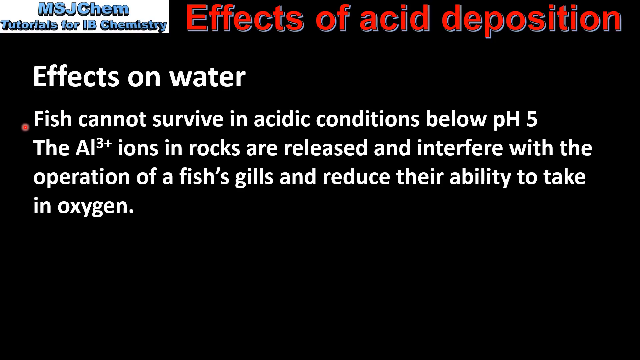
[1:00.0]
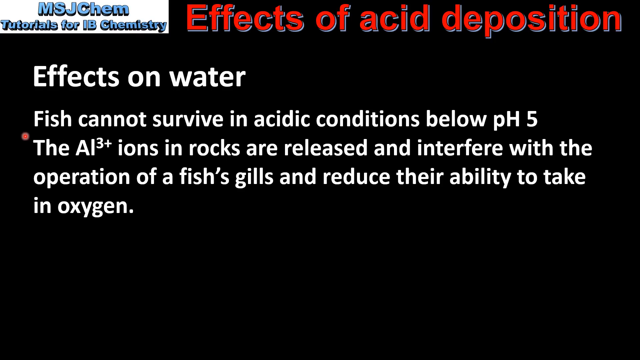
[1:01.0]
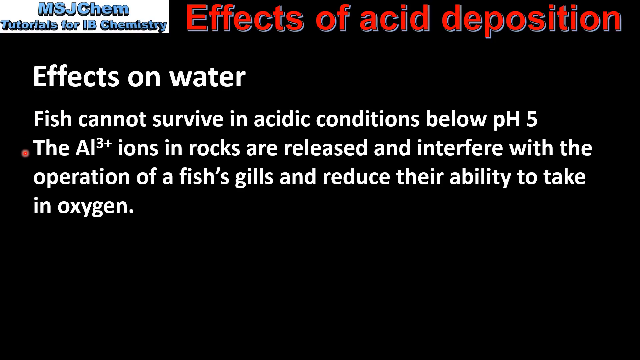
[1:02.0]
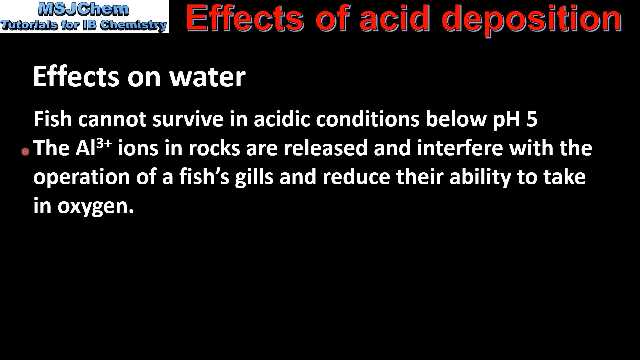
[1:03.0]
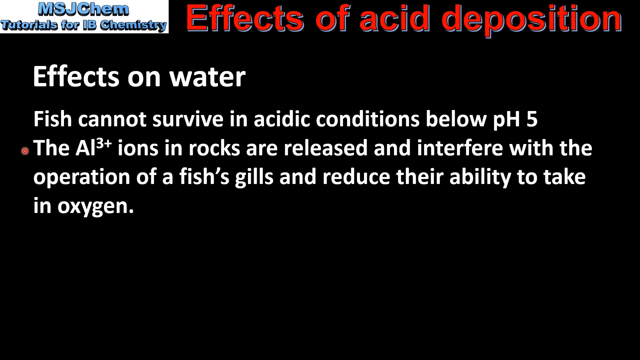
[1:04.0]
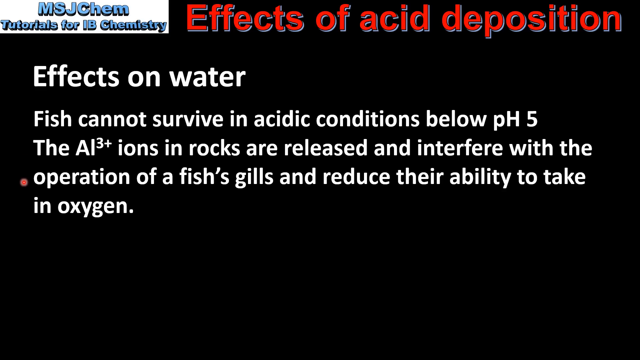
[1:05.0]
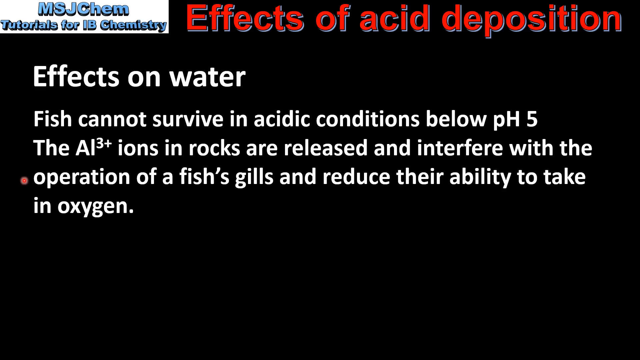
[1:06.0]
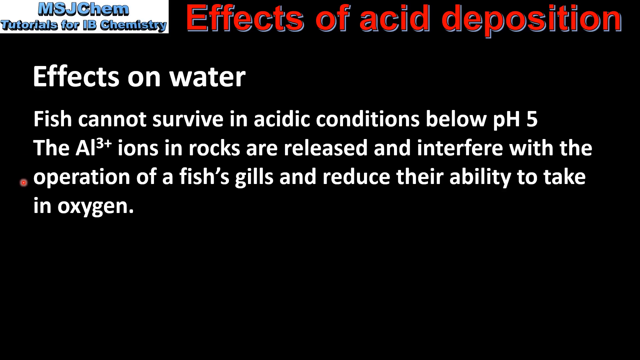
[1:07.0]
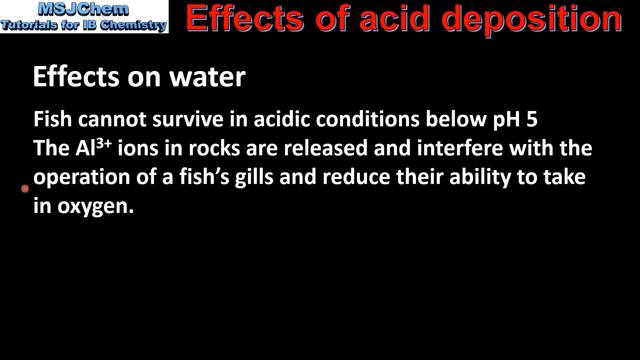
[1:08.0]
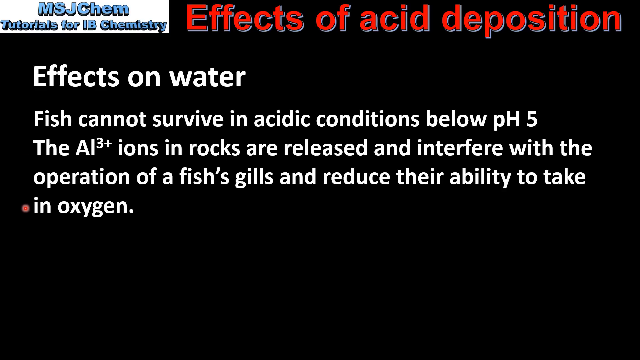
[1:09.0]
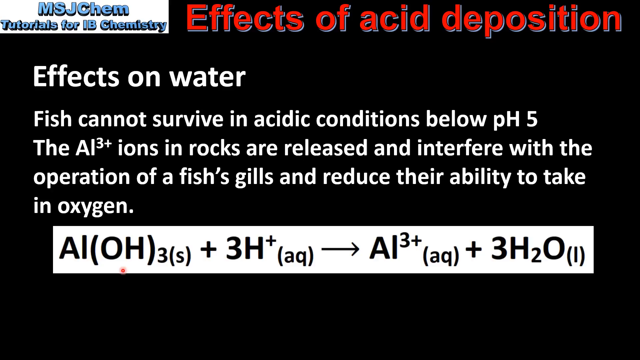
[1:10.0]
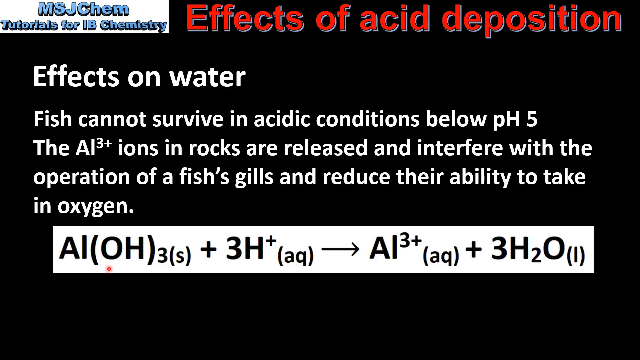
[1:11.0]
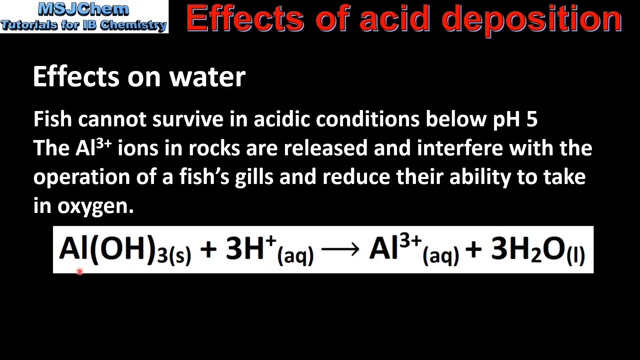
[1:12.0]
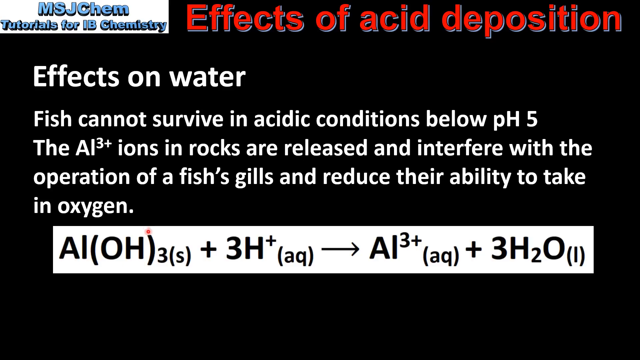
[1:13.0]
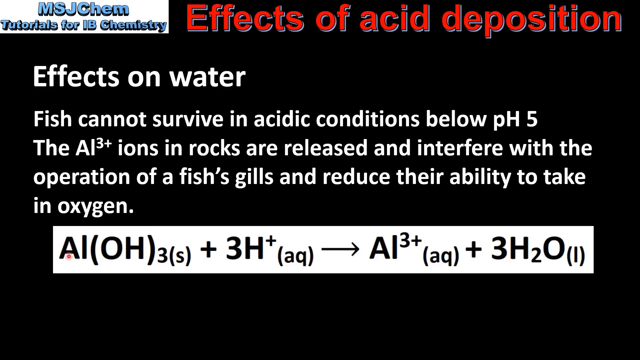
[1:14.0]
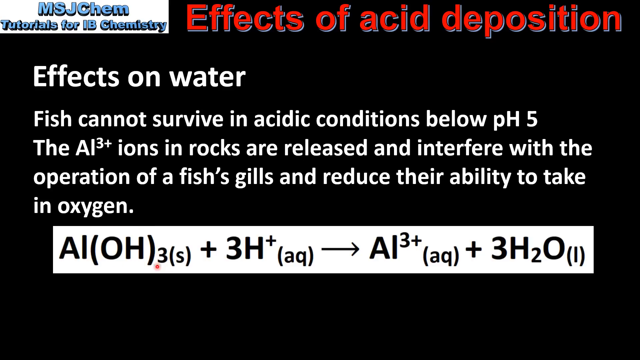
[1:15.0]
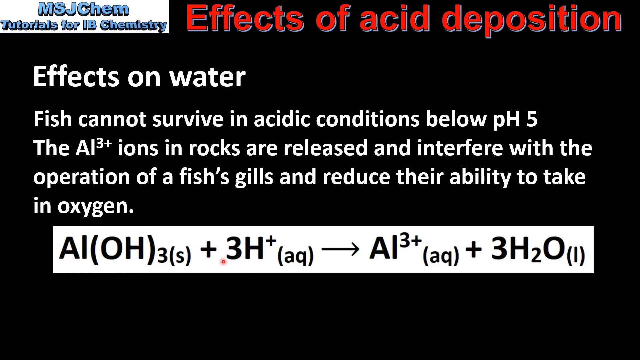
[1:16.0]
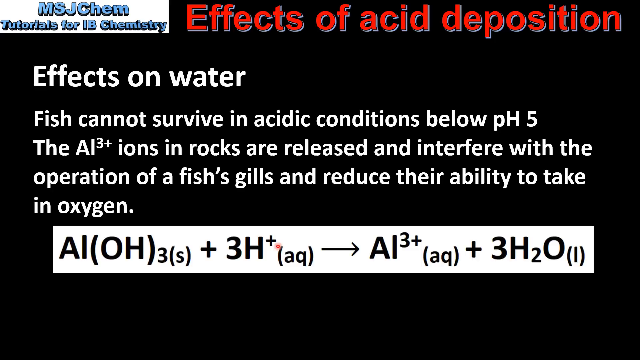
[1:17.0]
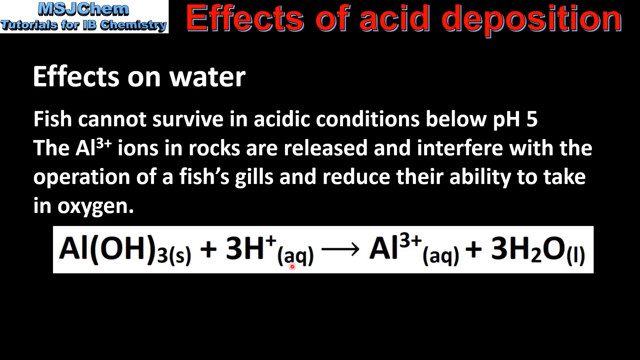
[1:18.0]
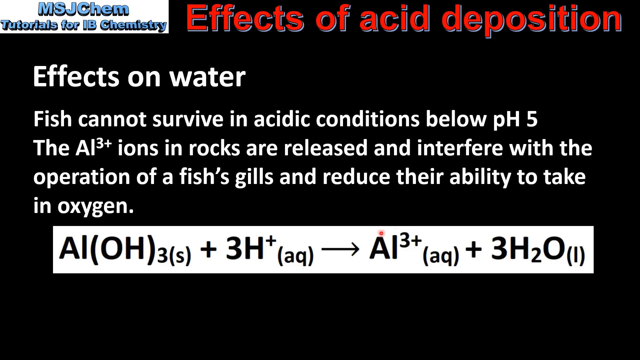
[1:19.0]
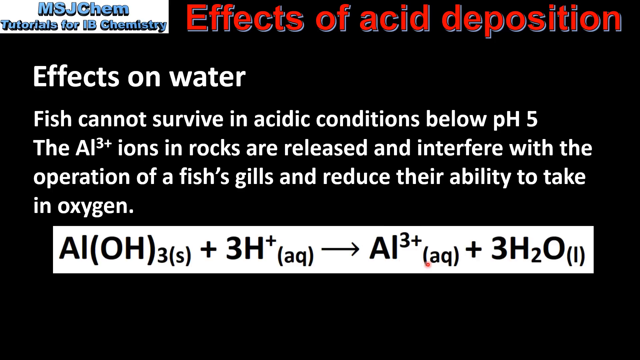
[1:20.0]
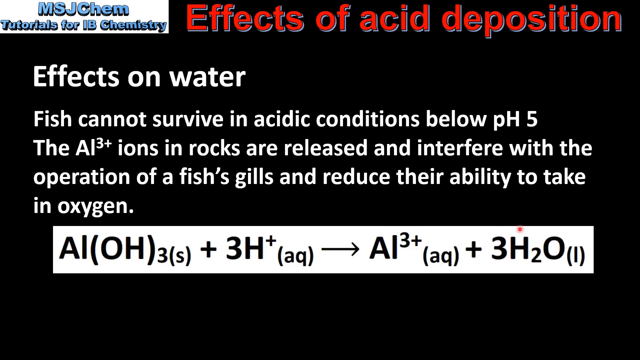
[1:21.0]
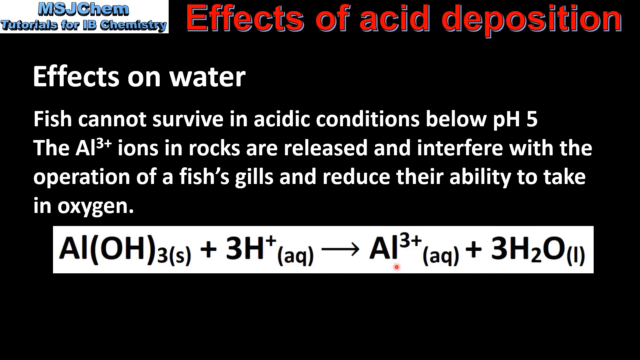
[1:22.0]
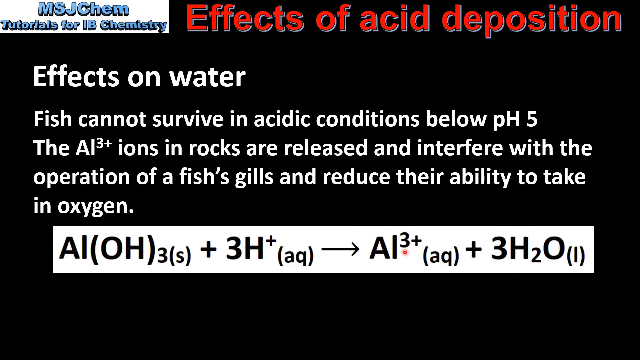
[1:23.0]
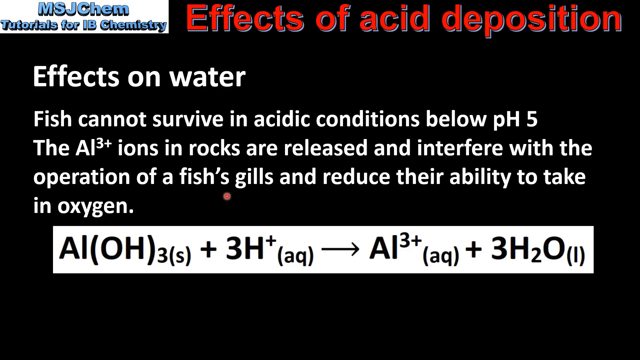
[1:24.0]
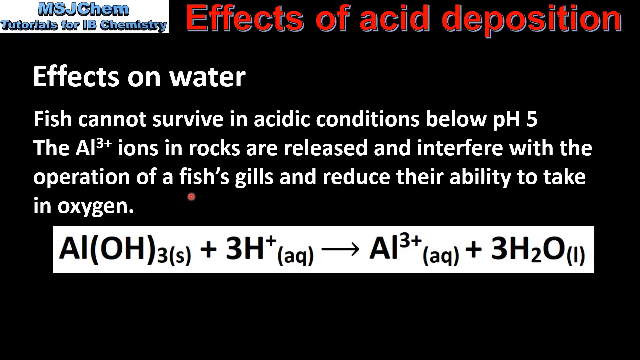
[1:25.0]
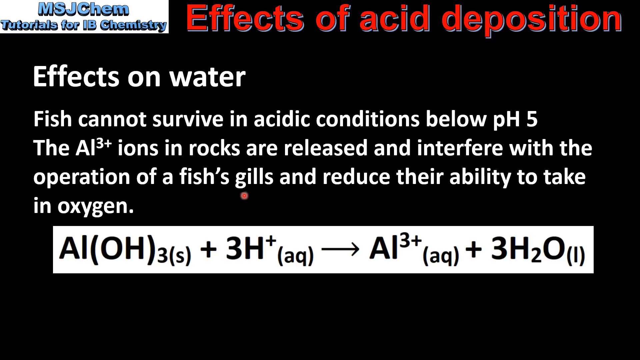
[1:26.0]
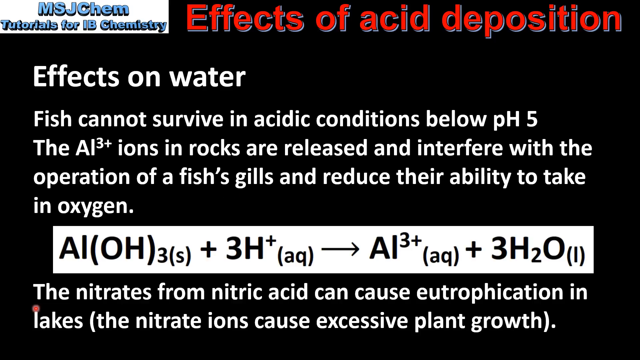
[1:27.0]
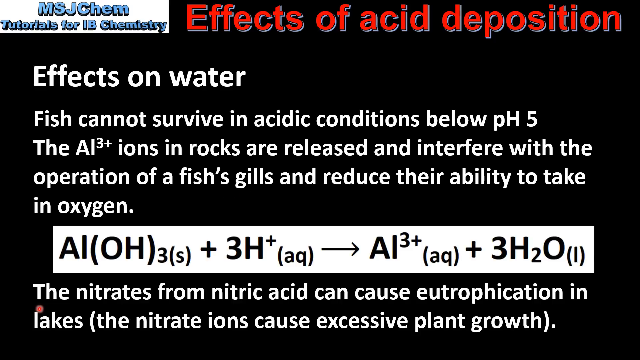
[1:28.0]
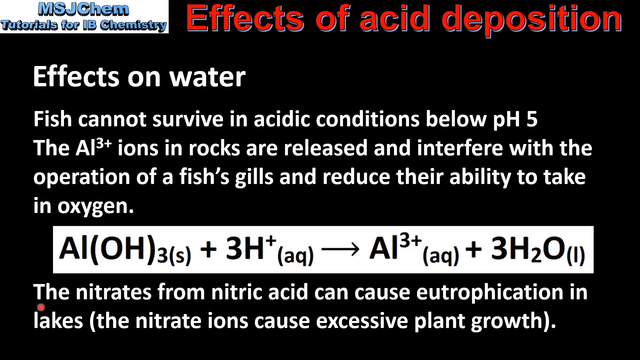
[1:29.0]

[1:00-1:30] The effects on water slide has white font over a black background reading "effects on water," then "fish cannot survive in acidic environments below pH 5. The AI3+ ions in rocks are released and interfere with the operation of a fish's gills and reduce their ability to take in oxygen." The presenter moves the cursor along with the words as if reading them as he goes. A big chemical formula appears at the bottom of the slide in black font on a white background, and the presenter moves the cursor along the formula as if reading and explaining it. Another point then appears below the formula: "the nitrates from nitric acid can cause eutrophication in lakes. The nitrate ions cause excessive plant growth."